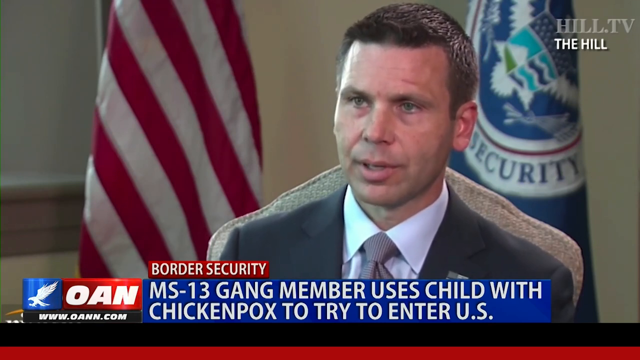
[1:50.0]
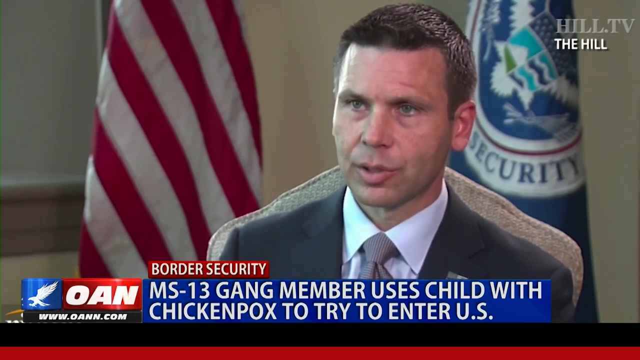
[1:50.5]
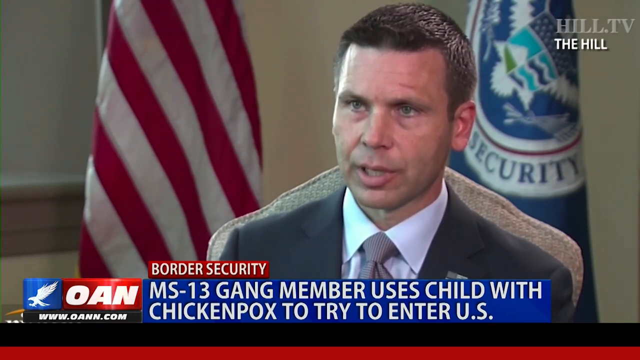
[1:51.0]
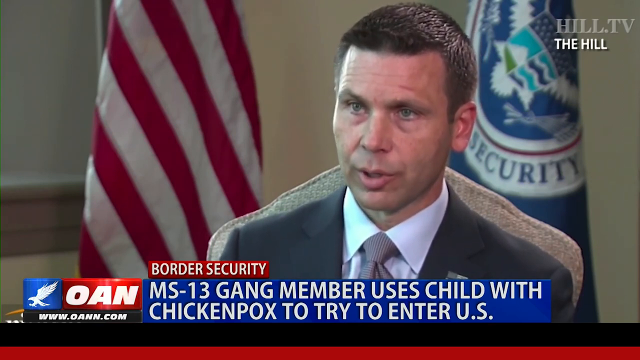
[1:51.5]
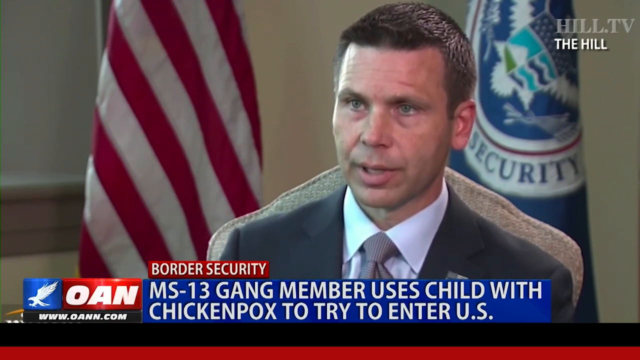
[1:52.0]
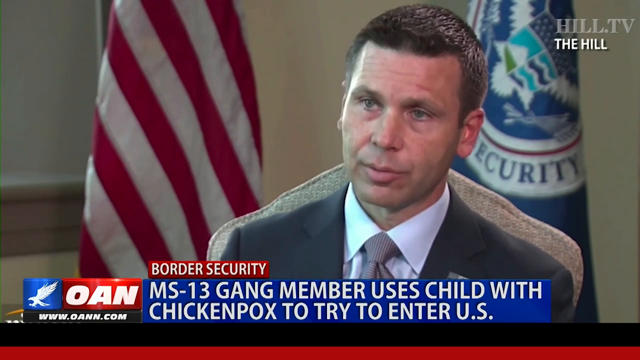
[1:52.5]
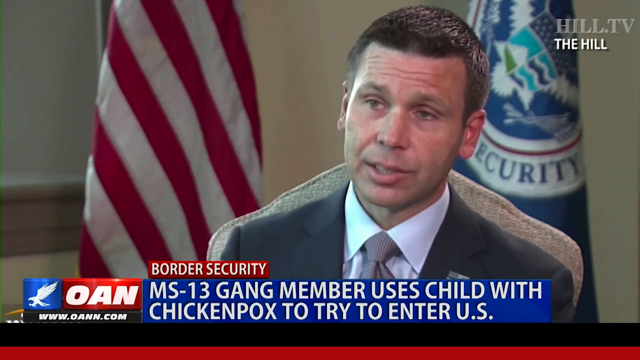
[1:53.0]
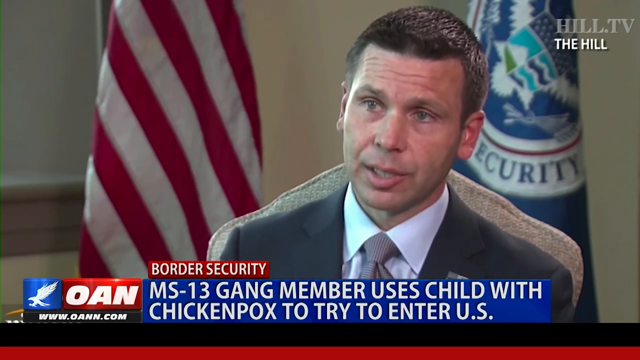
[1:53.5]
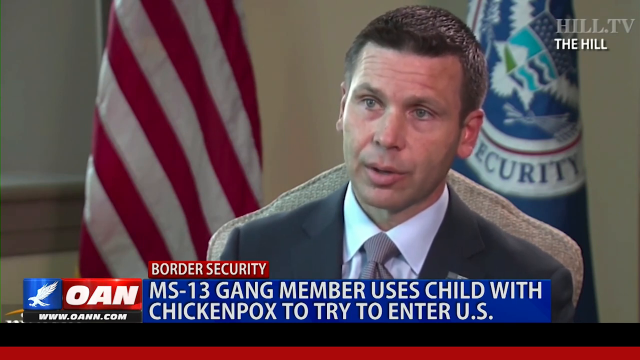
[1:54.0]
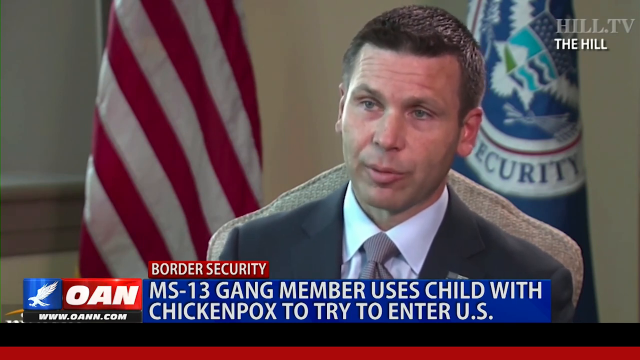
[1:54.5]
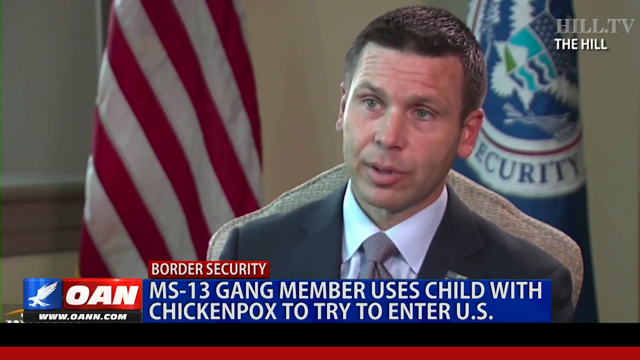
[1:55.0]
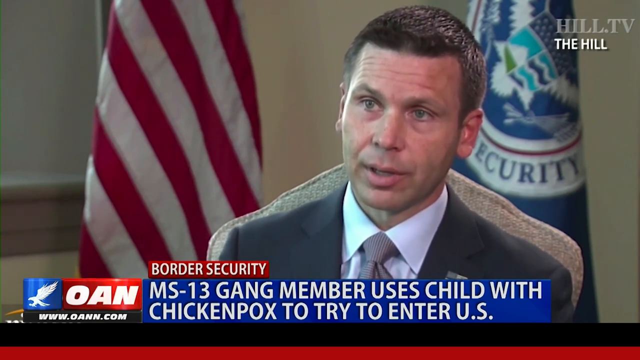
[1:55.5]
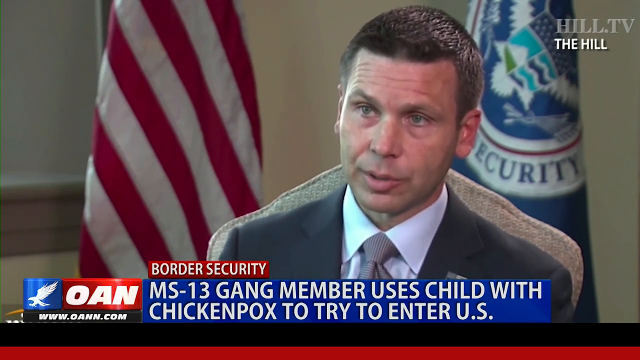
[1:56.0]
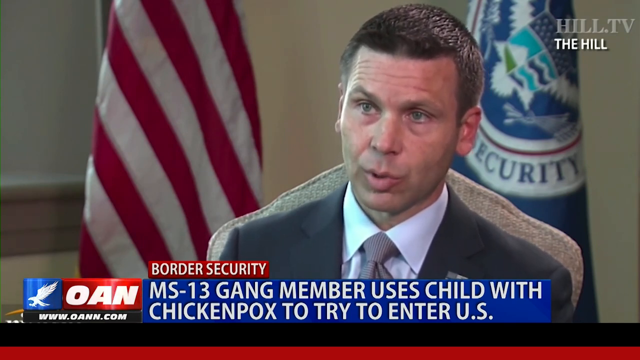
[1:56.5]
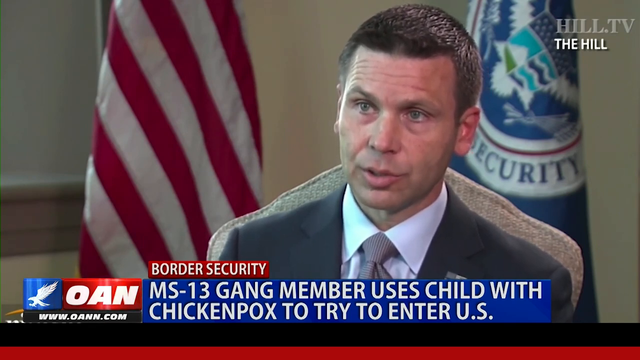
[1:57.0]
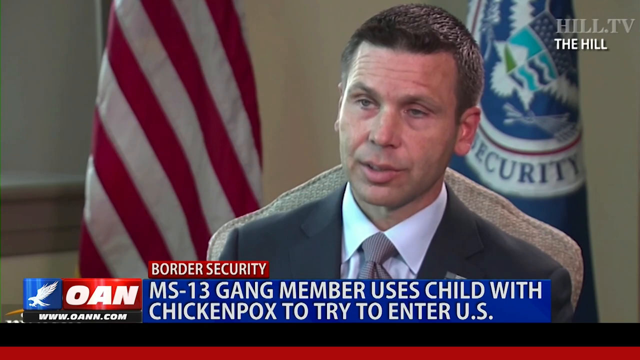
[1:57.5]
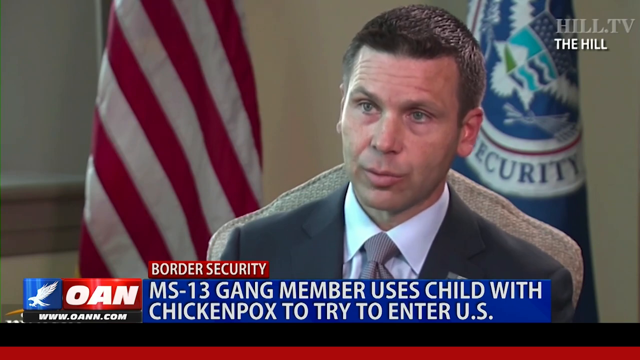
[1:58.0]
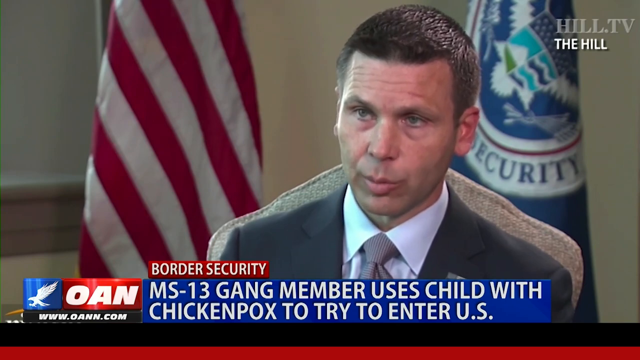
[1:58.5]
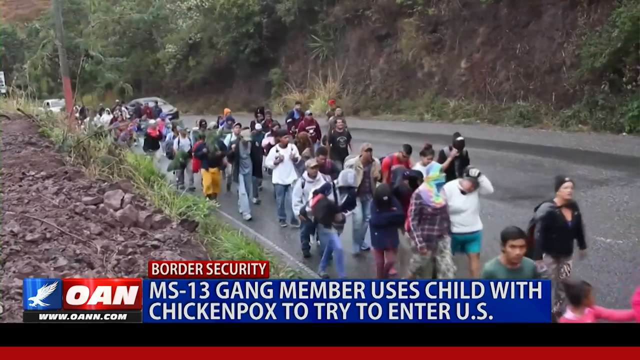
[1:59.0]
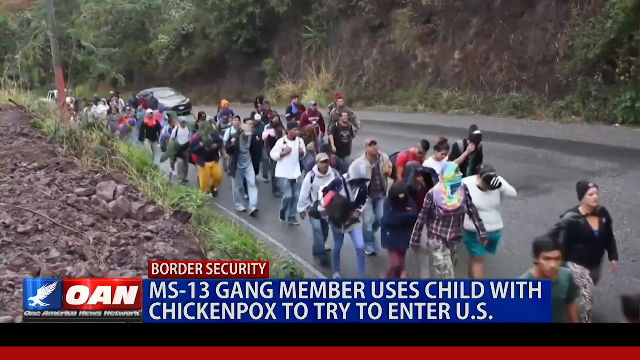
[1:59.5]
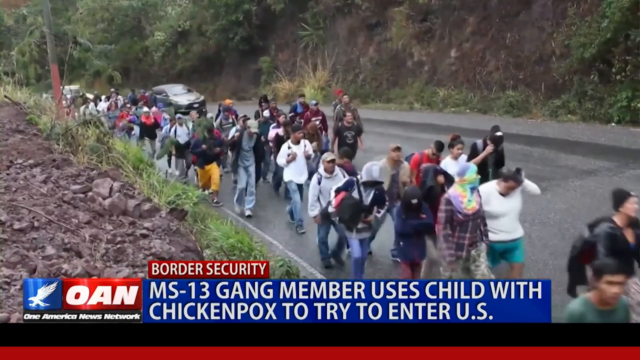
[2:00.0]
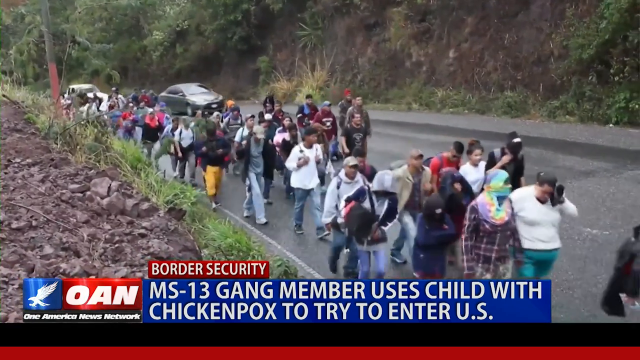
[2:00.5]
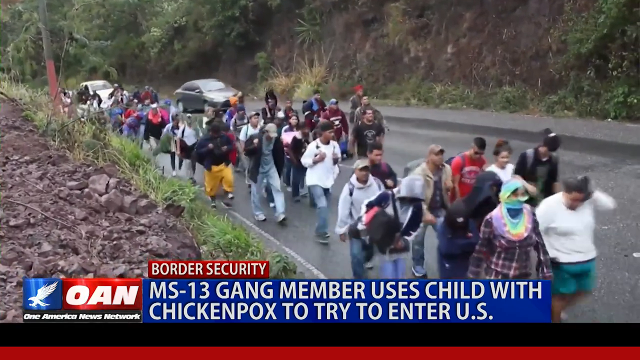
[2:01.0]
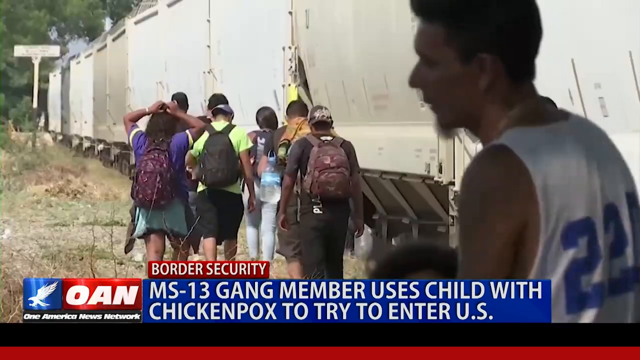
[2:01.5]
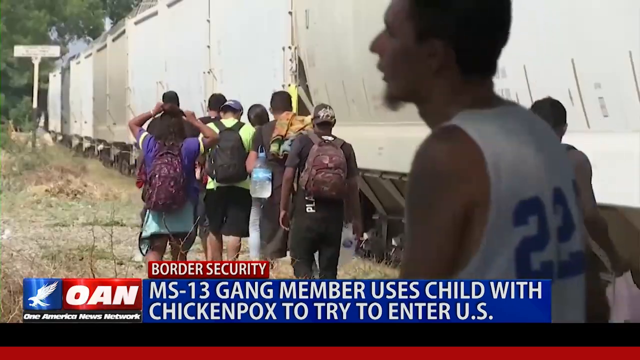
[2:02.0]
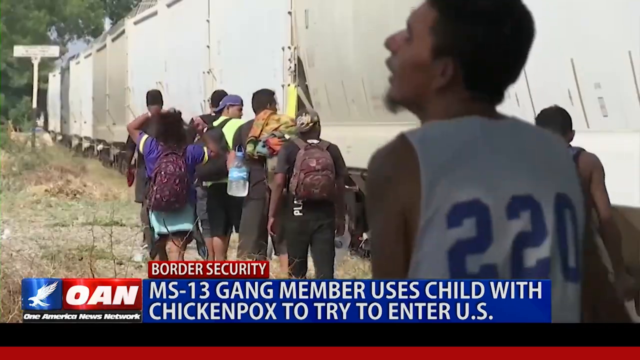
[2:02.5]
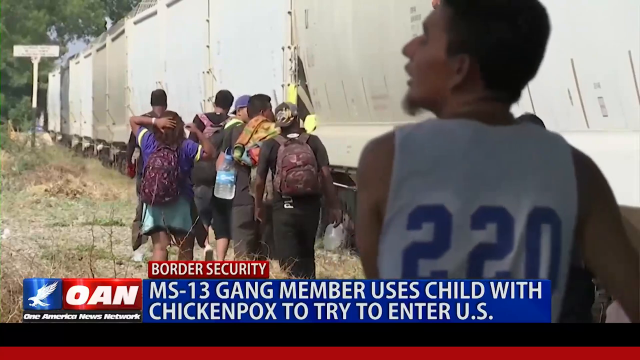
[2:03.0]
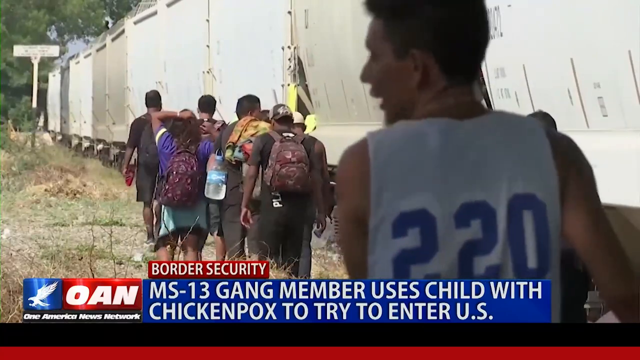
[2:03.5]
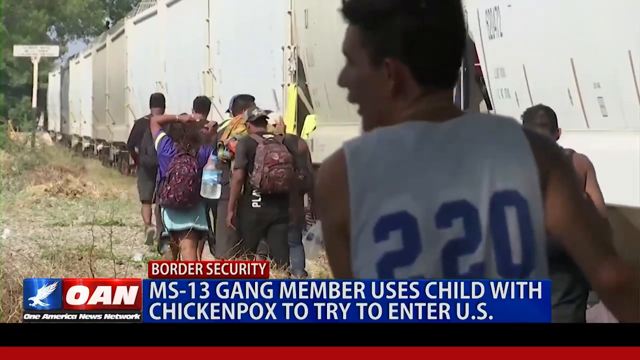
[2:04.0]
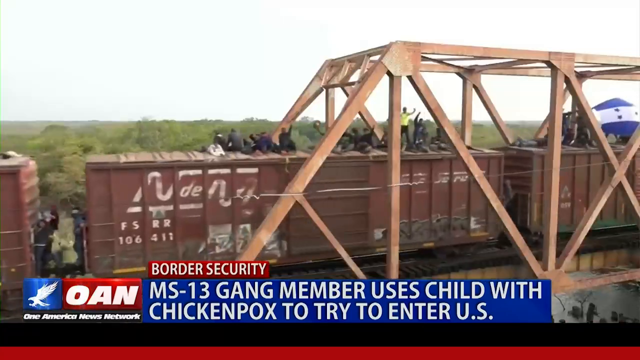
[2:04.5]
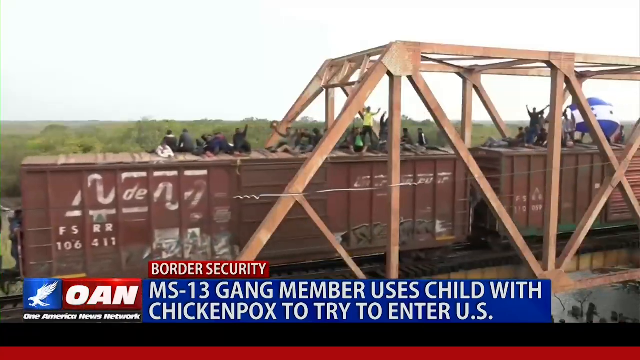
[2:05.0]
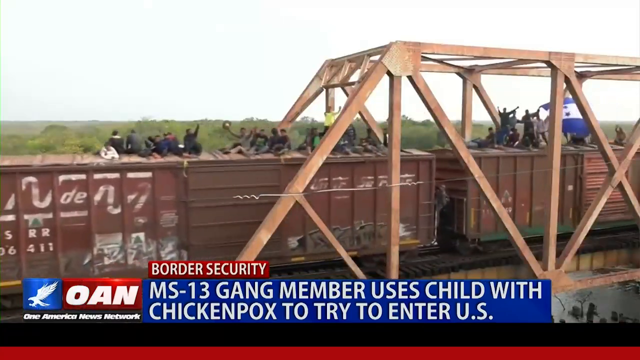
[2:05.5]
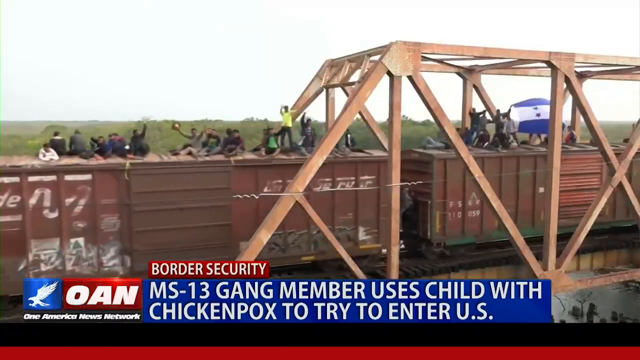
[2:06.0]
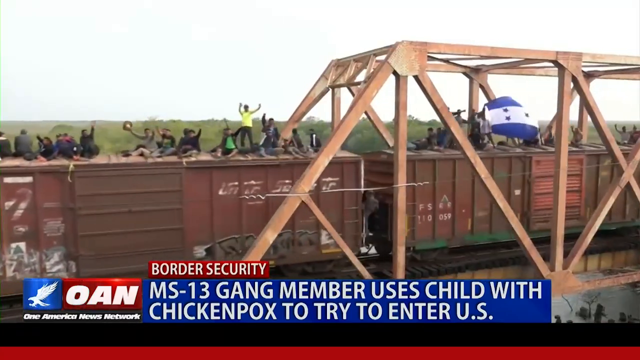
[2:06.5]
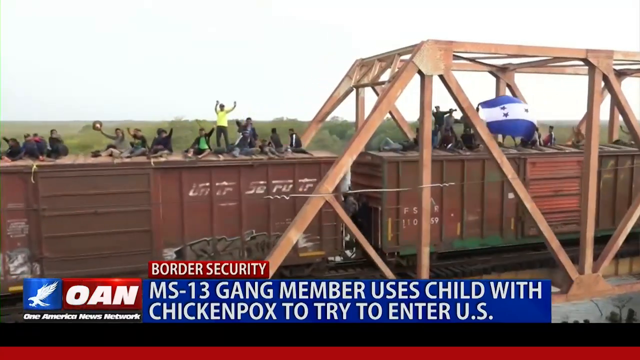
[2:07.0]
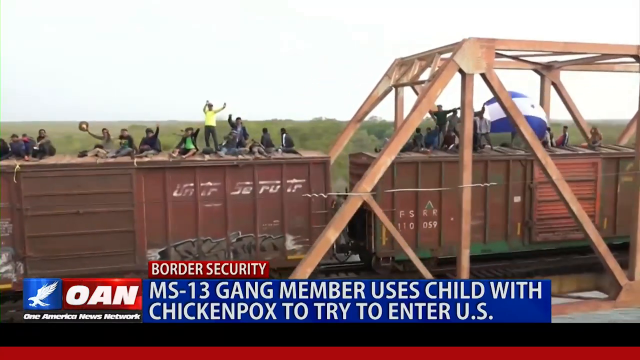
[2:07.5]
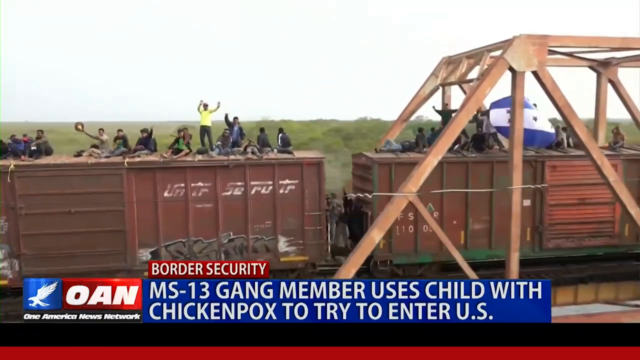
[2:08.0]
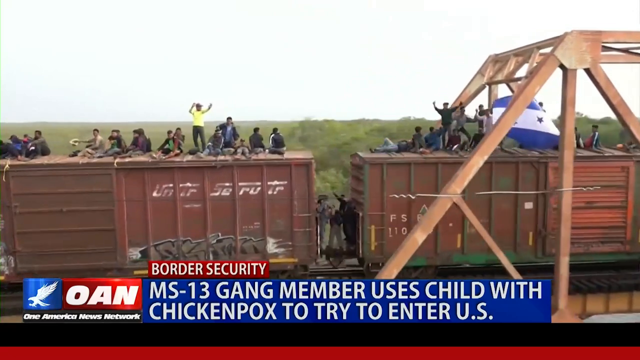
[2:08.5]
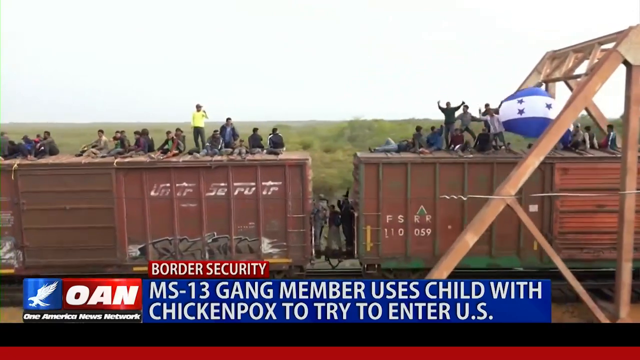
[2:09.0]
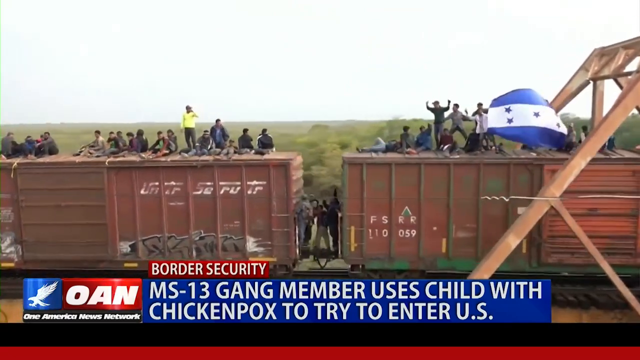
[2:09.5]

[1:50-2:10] The news video interviews the man, with an American flag behind him and, on the other side, a flag with something about security on it, probably homeland security. Back at the border, men ride on freight trains and people walk down the road. The OAN banner about the MS-13 gang member using a child with chicken pox to try to enter the US is still on screen, and there is text in the upper right. Many people walk down the street; none look terribly hungry, thin or sick.